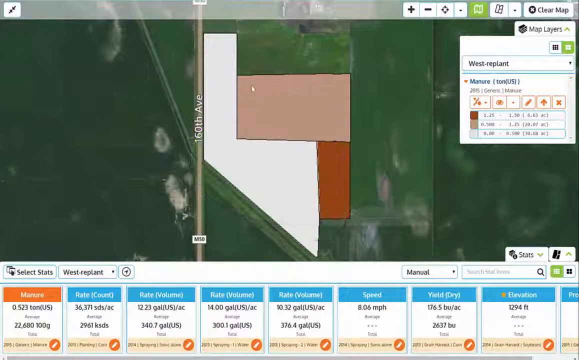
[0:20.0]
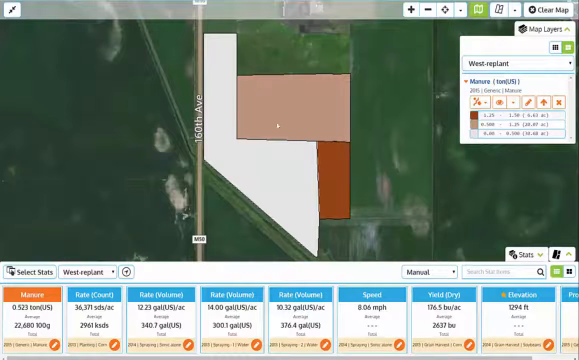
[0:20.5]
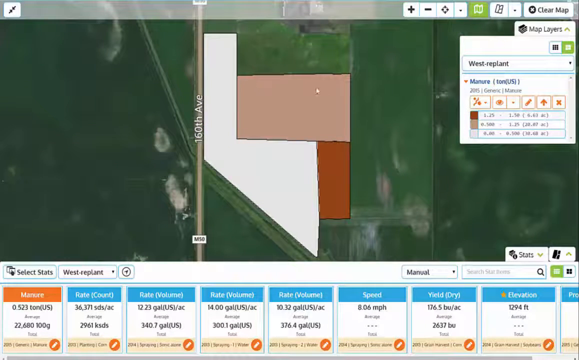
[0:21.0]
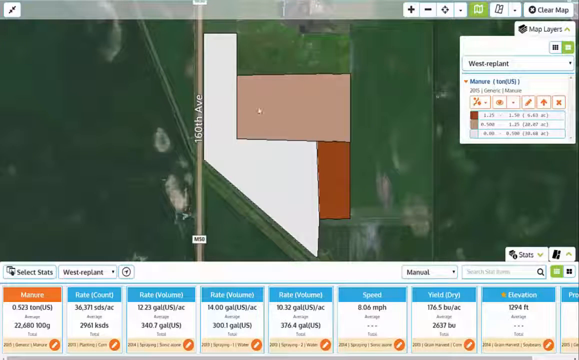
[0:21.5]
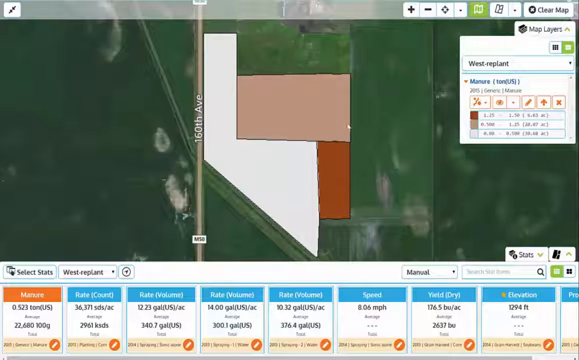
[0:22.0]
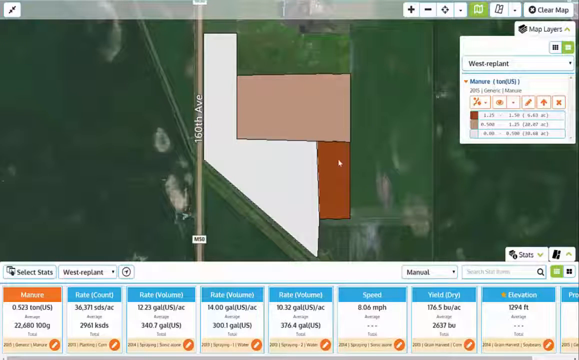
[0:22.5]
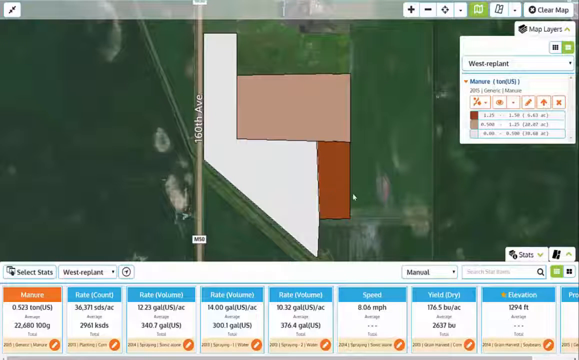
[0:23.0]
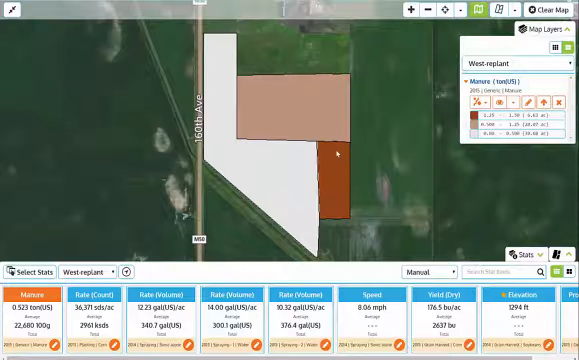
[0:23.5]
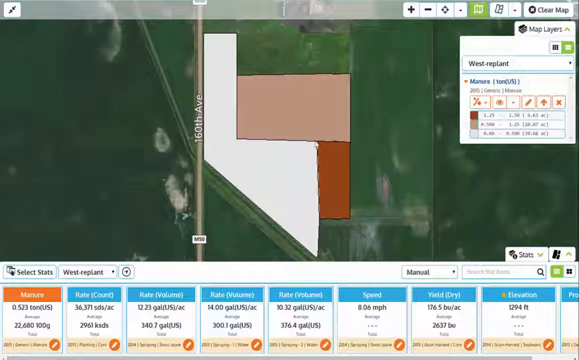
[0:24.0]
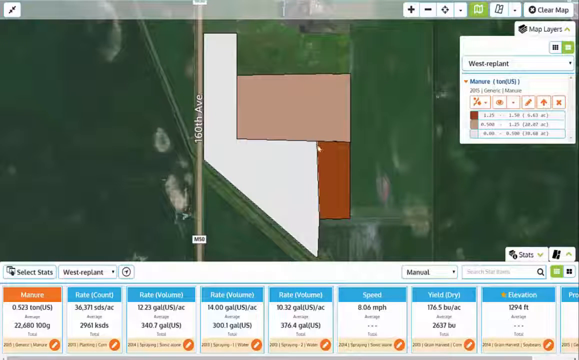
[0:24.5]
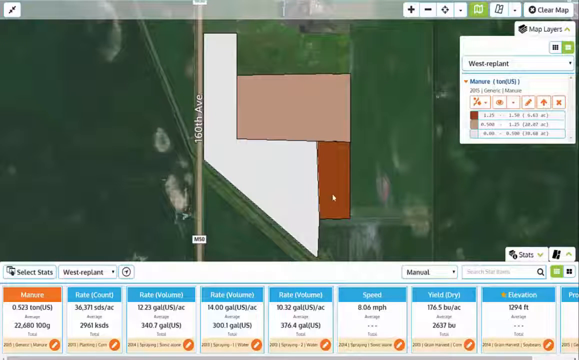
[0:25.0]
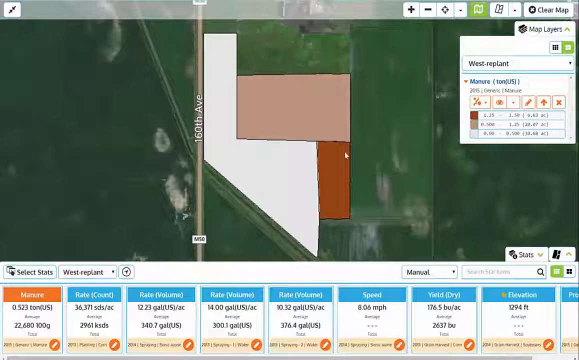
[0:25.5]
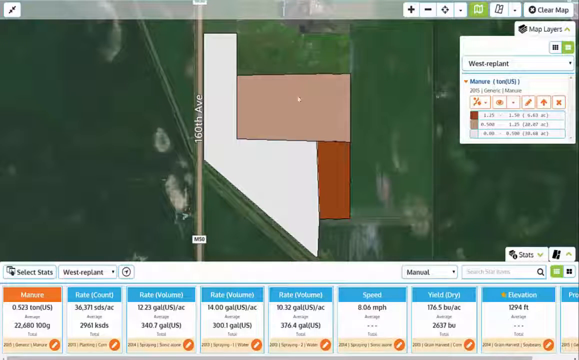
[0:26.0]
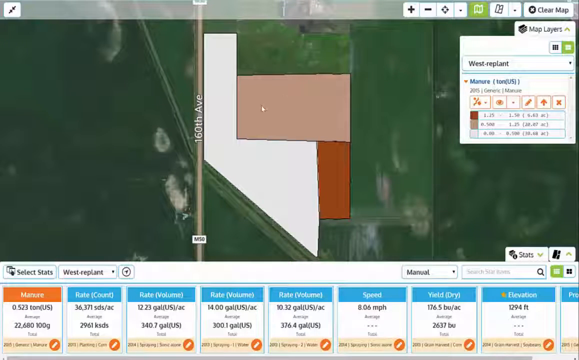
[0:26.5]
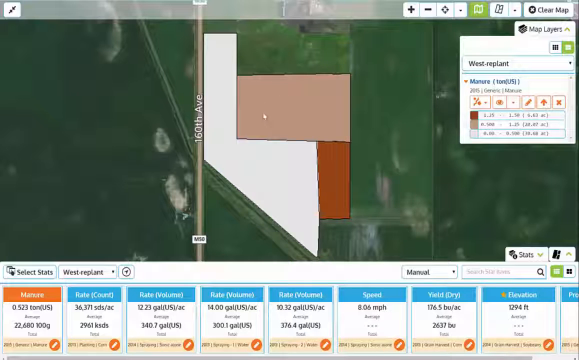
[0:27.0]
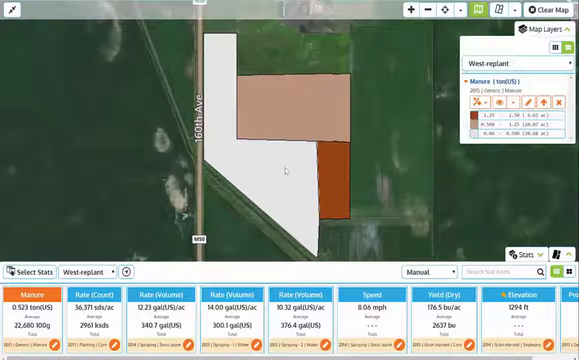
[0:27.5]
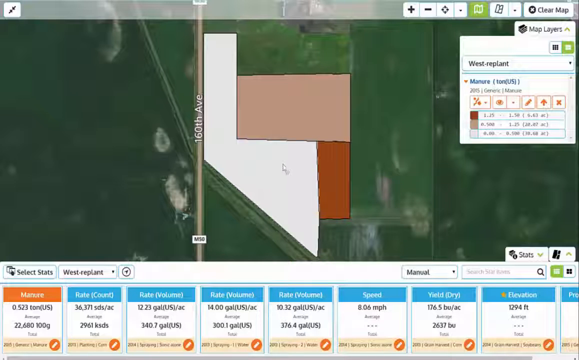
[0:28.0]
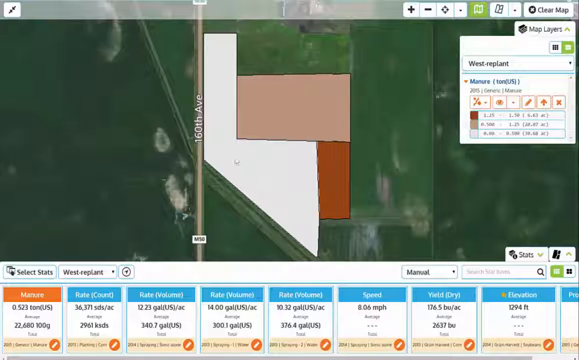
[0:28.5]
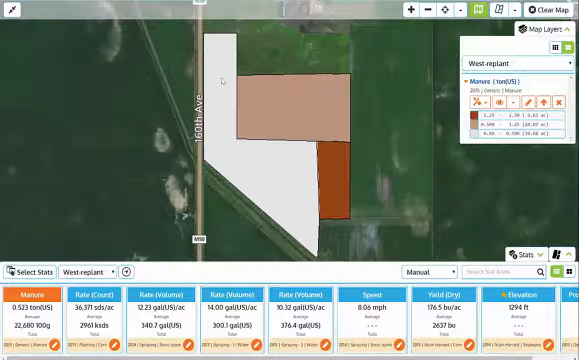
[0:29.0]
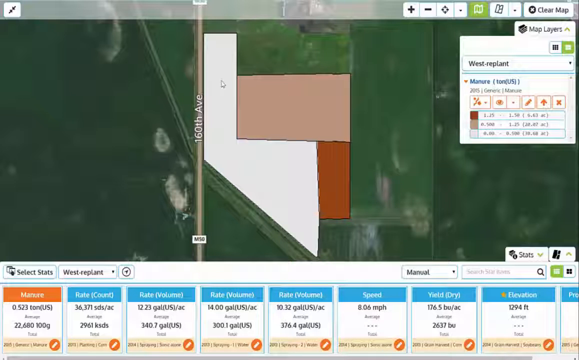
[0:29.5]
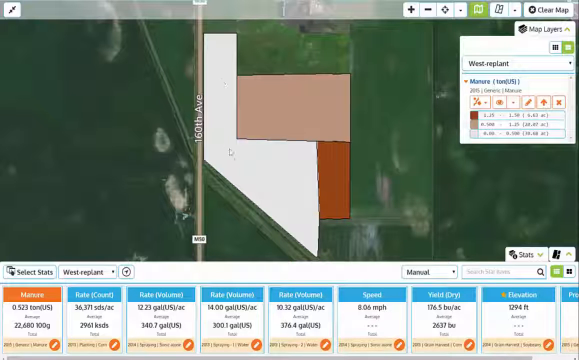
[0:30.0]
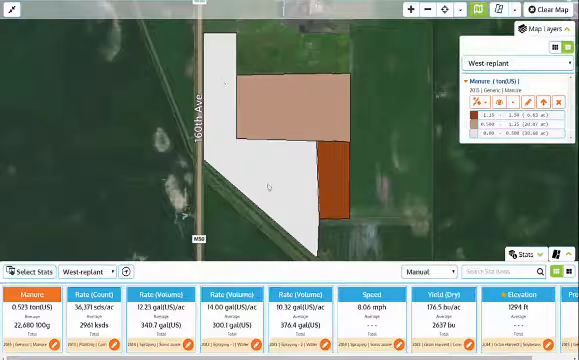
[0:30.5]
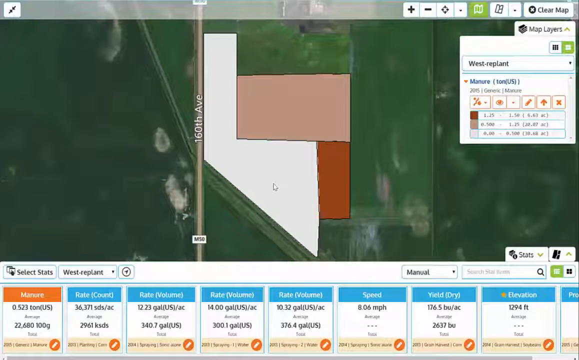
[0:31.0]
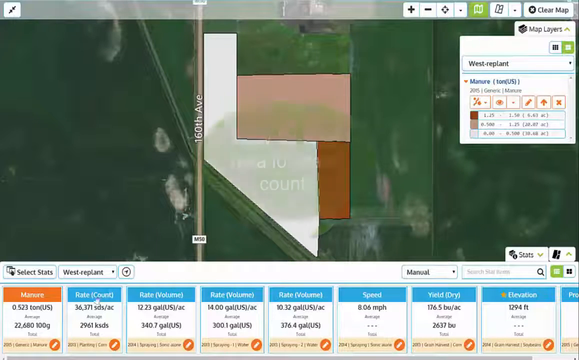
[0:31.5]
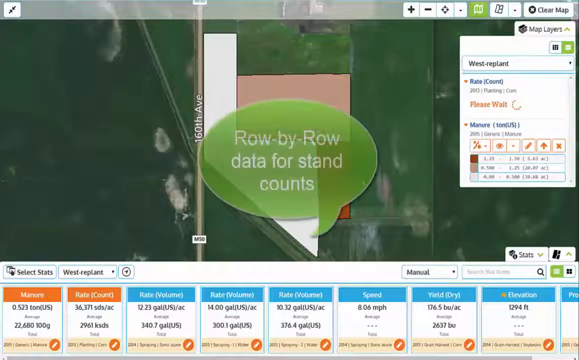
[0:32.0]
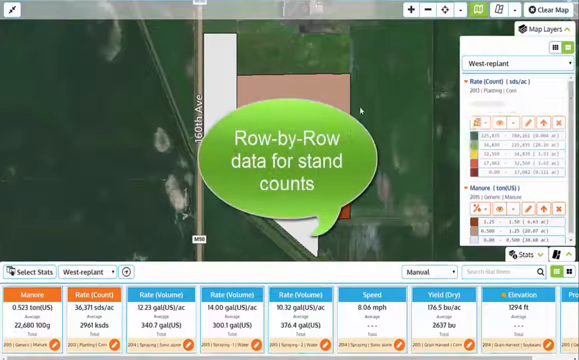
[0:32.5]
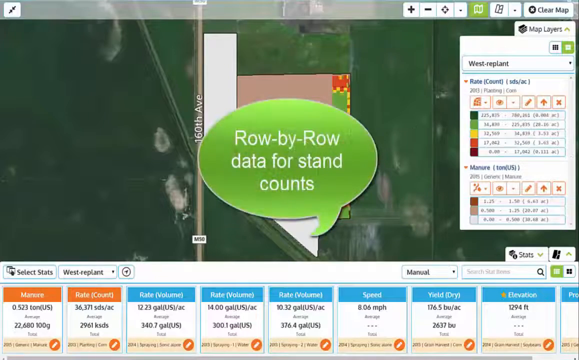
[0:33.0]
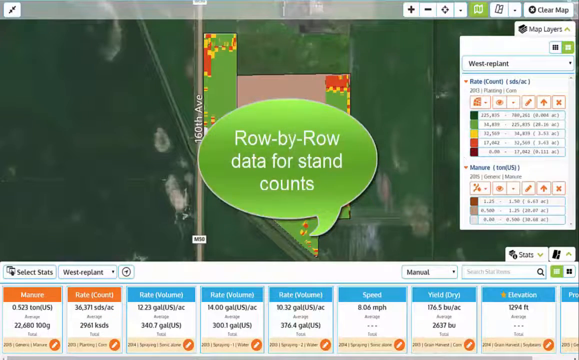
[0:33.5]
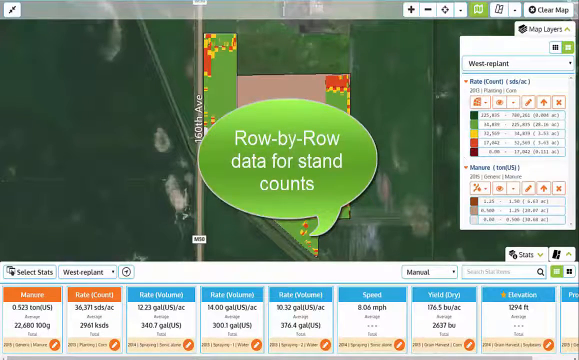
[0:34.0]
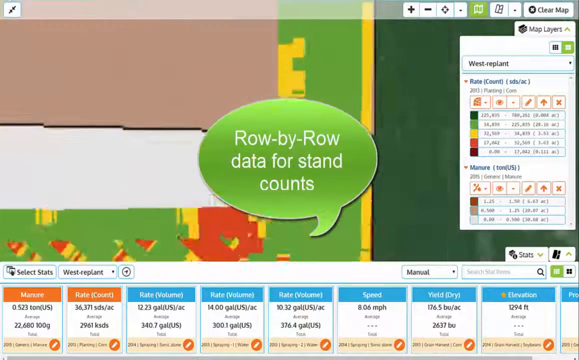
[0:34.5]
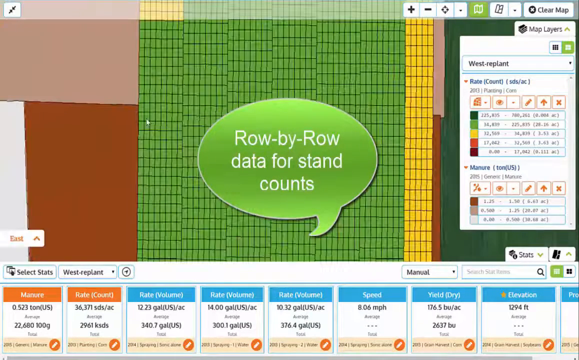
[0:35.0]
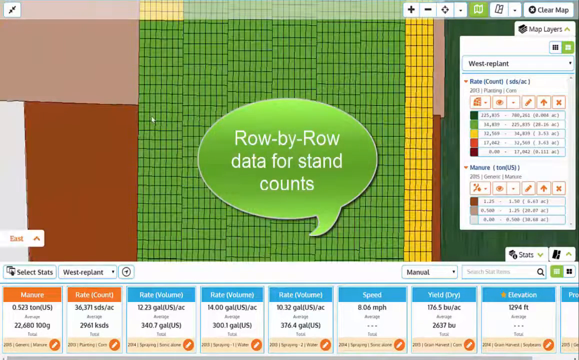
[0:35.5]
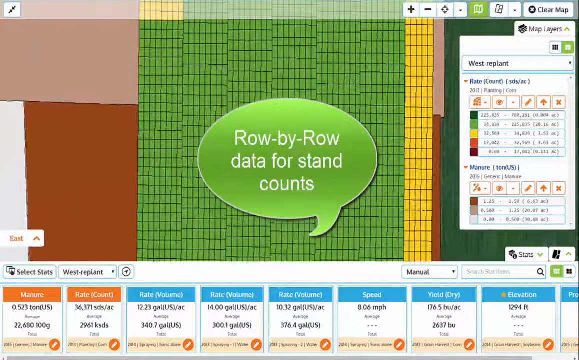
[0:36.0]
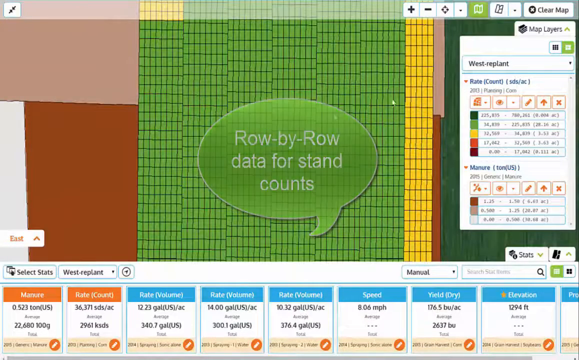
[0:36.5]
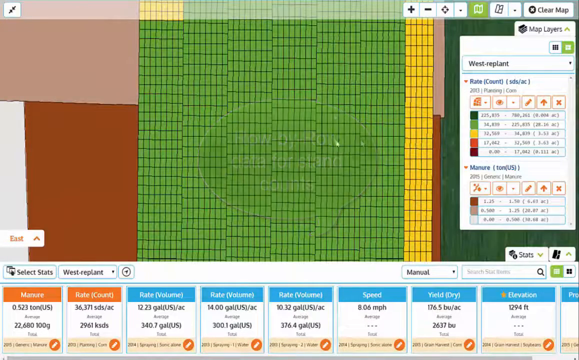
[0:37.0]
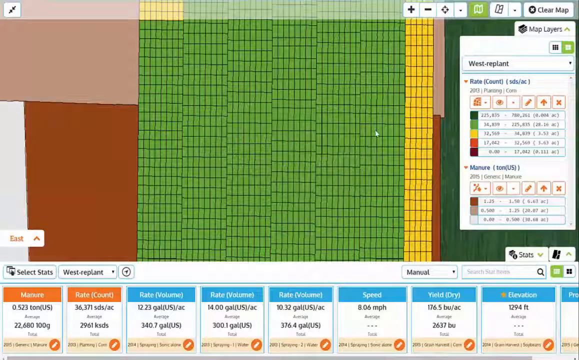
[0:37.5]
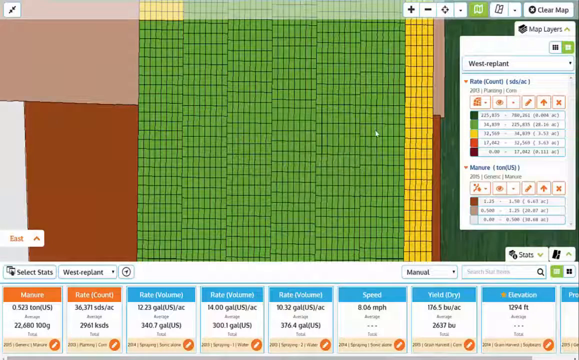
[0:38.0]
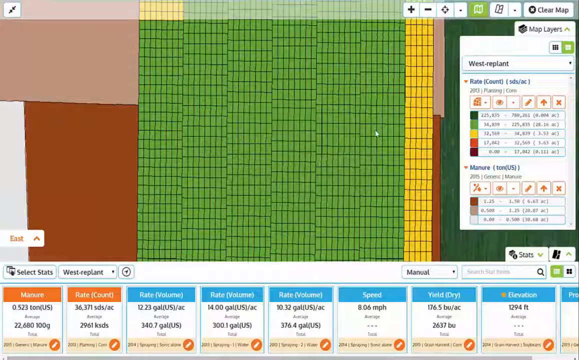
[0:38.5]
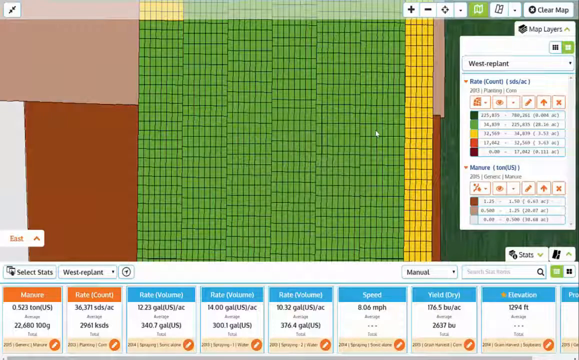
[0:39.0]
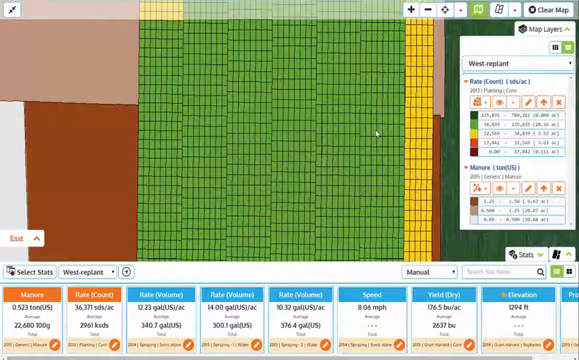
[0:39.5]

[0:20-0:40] A big floor plan appears, with lots of sections carved out of it, including a beige section, a brown one, and a white one. It seems to show a distribution of manure, apparently for the field of corn. The left side is 160th Avenue. Someone points at different colored sections of this graph. The view then moves to row-by-row data for stand counts, zooming in on a section that apparently shows row-by-row stand counts as red, yellow, and green squares, each standing for different counts, apparently of corn. The values shown include 200,000, 30,000, 20,000, 17,000, and 8,000. Text appears to say "planting corn".